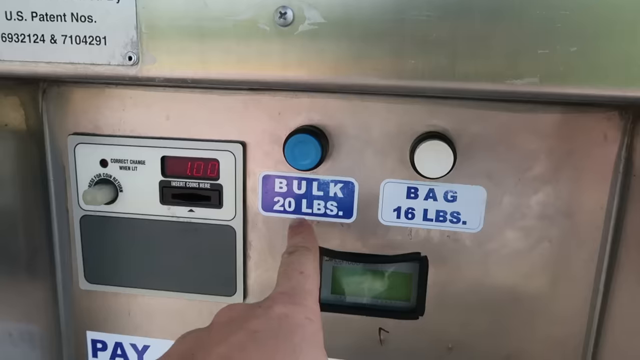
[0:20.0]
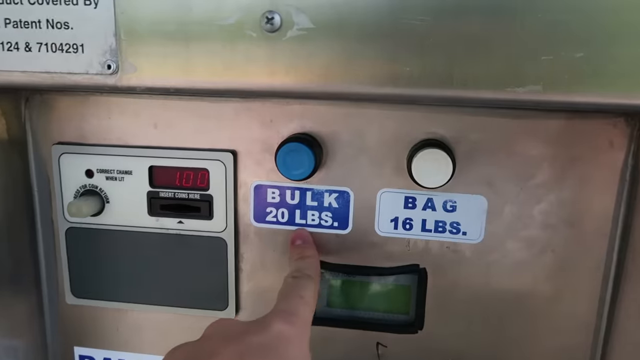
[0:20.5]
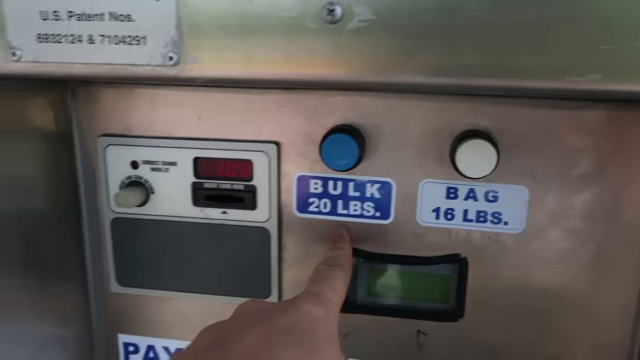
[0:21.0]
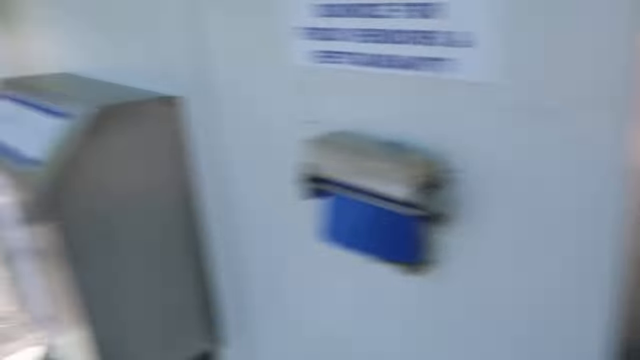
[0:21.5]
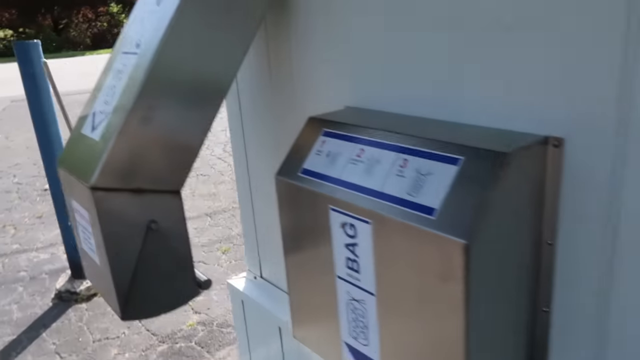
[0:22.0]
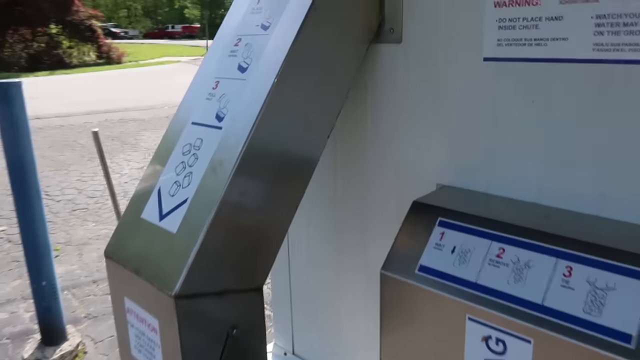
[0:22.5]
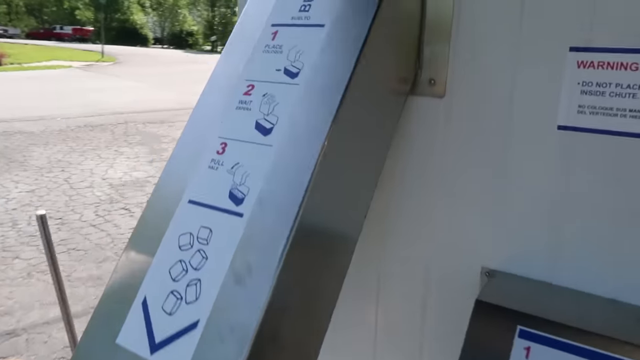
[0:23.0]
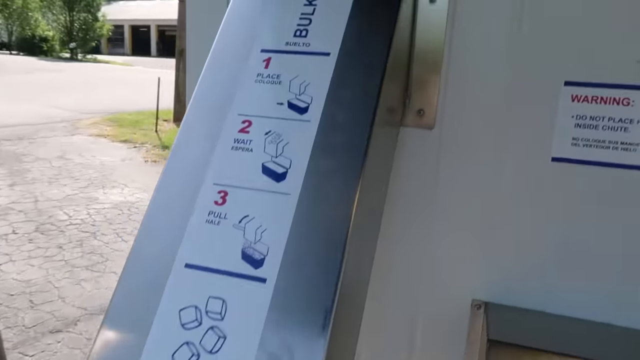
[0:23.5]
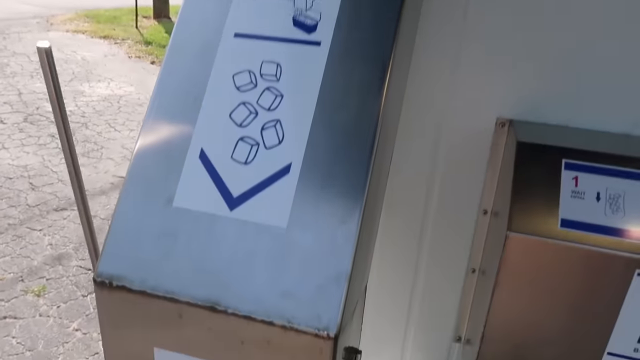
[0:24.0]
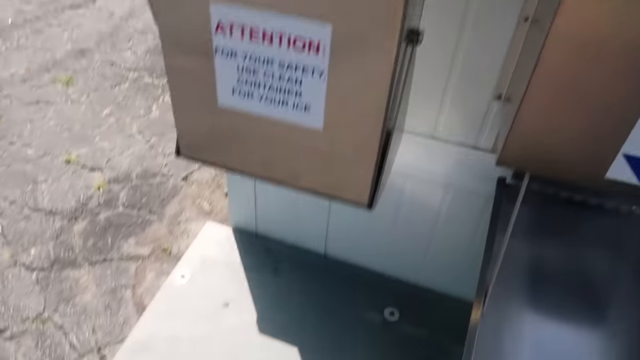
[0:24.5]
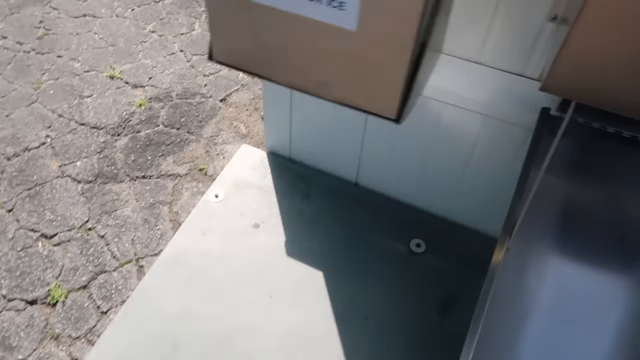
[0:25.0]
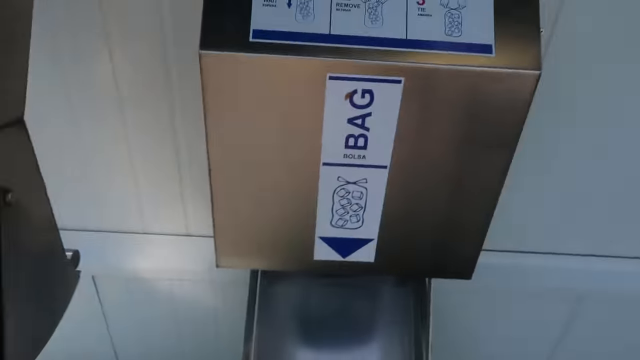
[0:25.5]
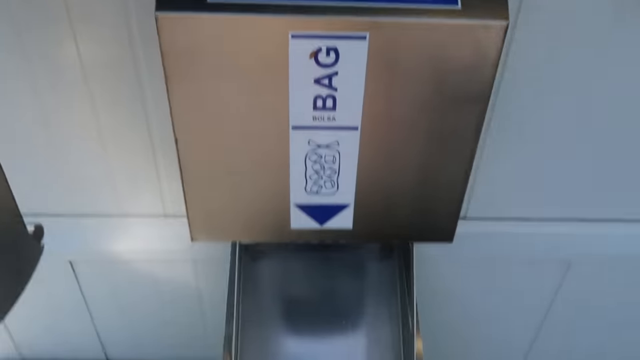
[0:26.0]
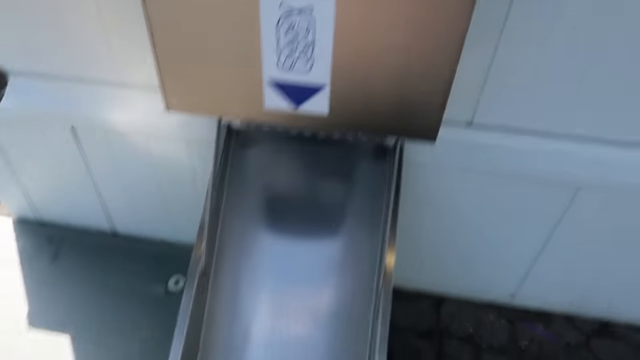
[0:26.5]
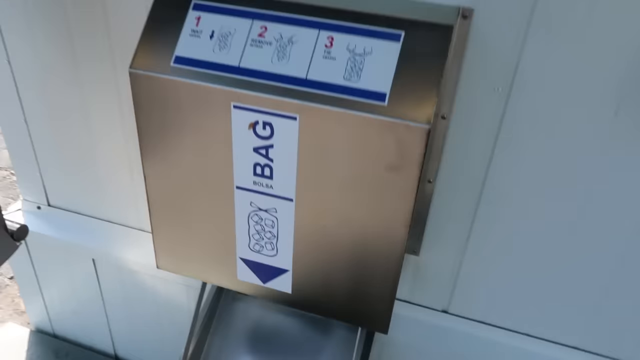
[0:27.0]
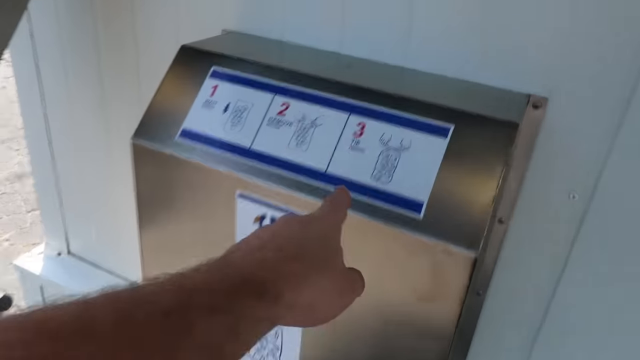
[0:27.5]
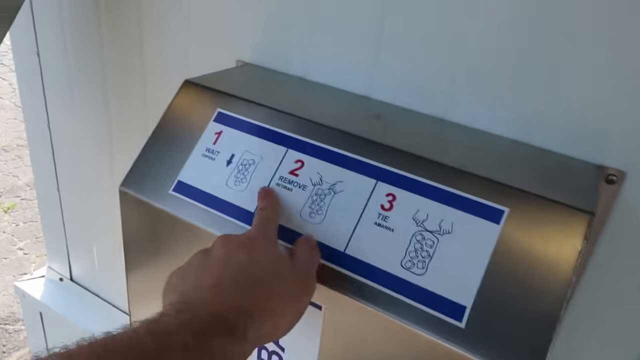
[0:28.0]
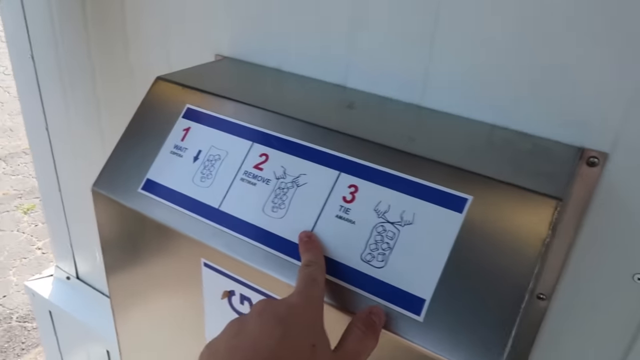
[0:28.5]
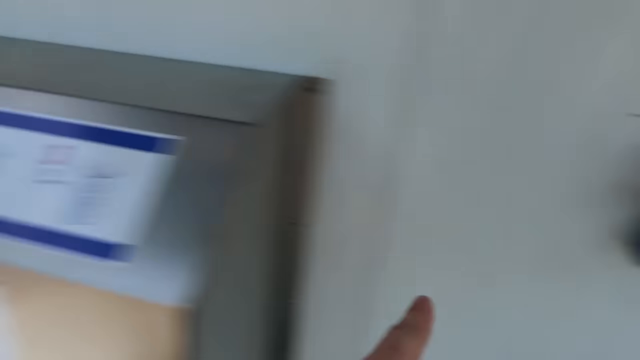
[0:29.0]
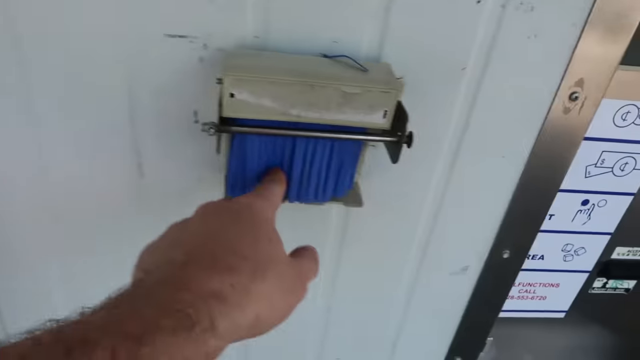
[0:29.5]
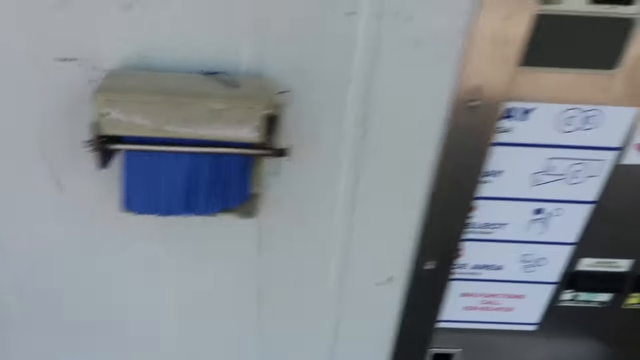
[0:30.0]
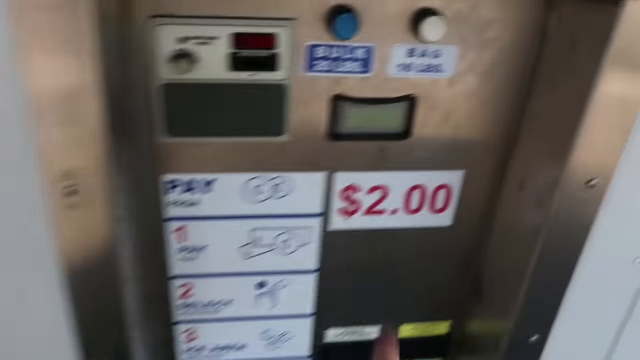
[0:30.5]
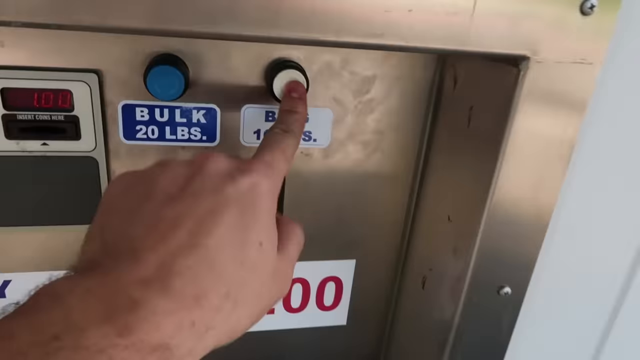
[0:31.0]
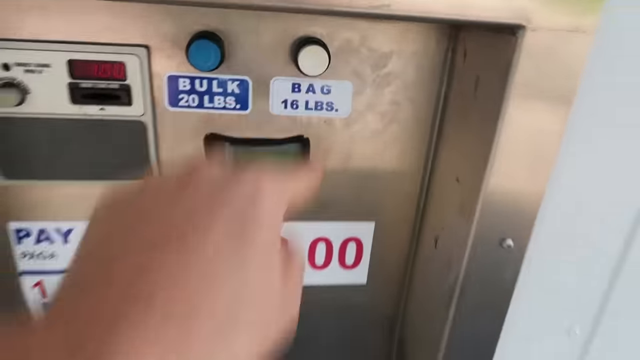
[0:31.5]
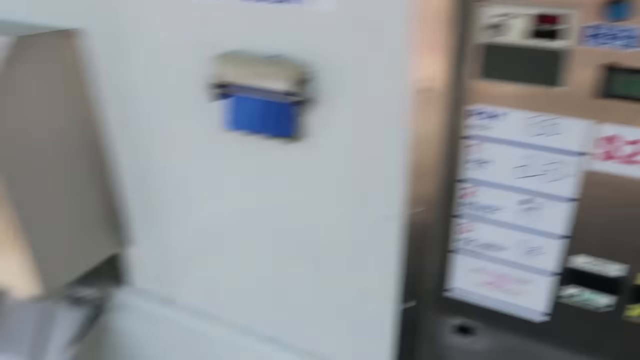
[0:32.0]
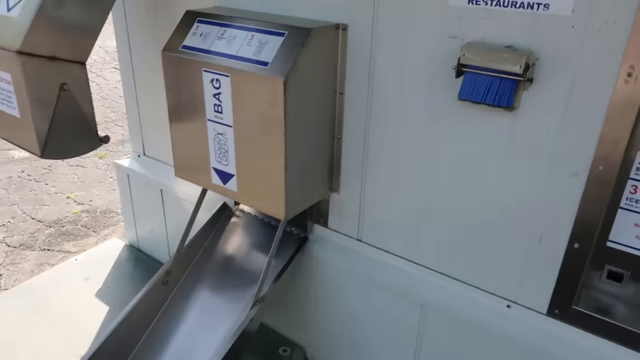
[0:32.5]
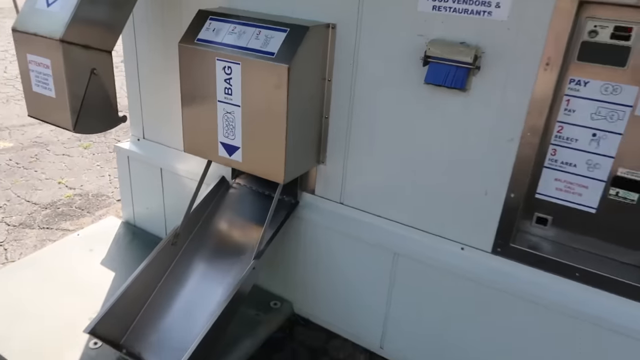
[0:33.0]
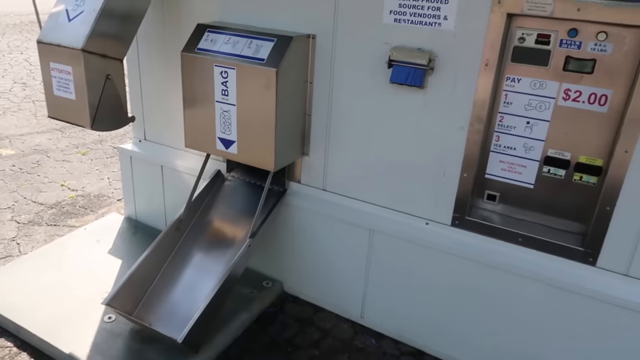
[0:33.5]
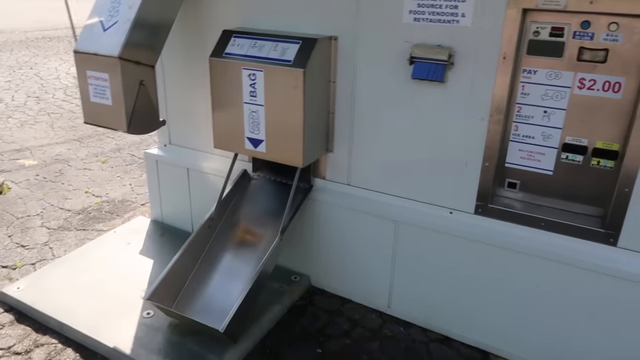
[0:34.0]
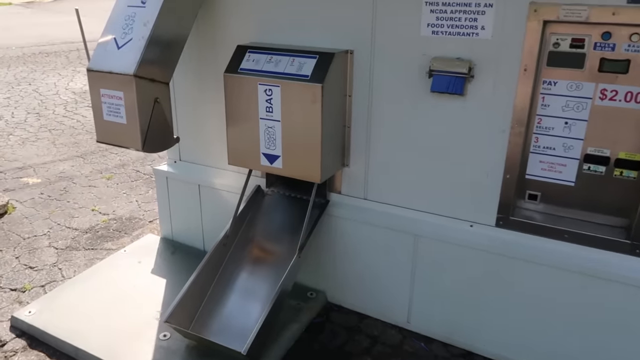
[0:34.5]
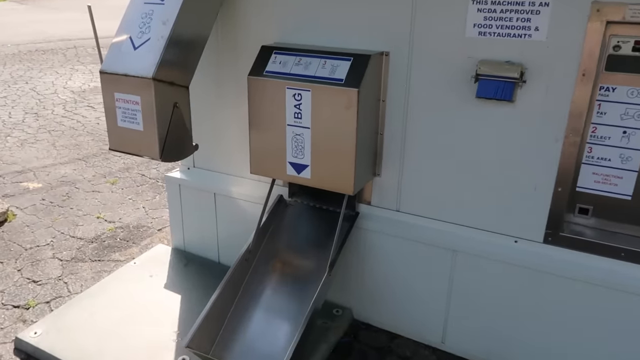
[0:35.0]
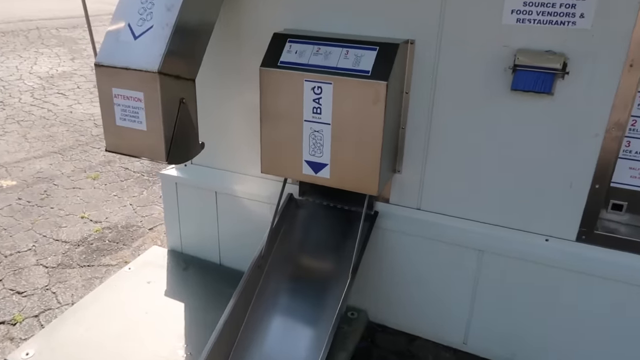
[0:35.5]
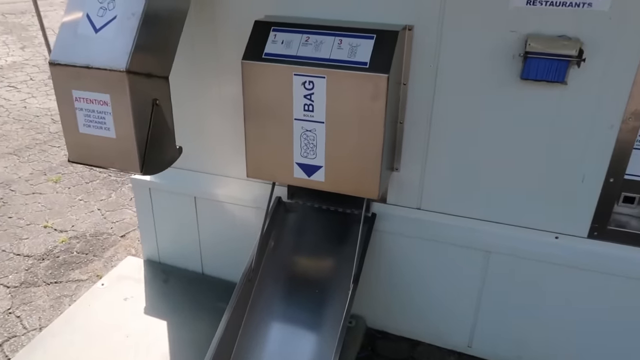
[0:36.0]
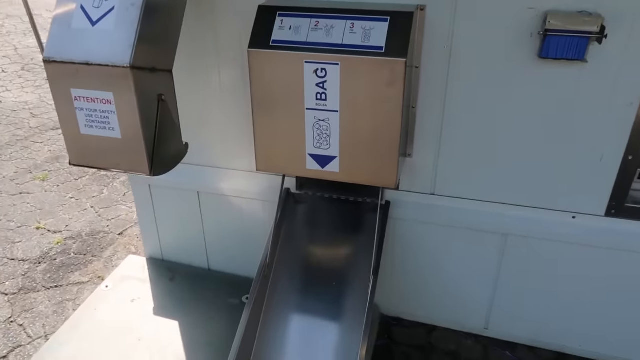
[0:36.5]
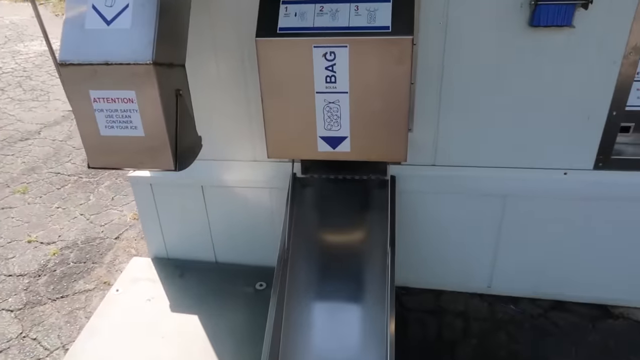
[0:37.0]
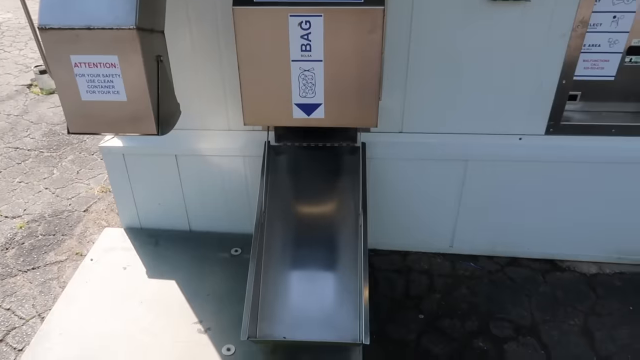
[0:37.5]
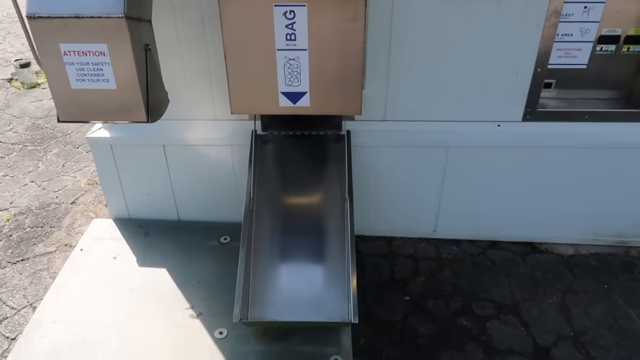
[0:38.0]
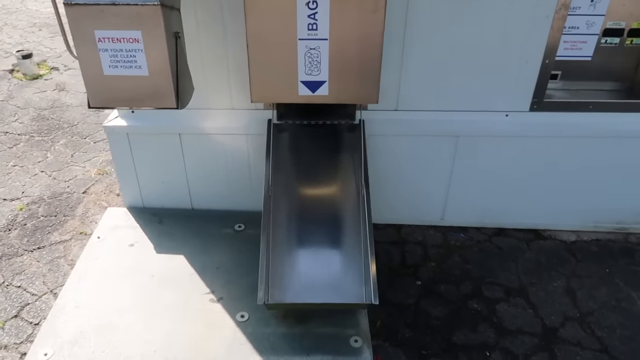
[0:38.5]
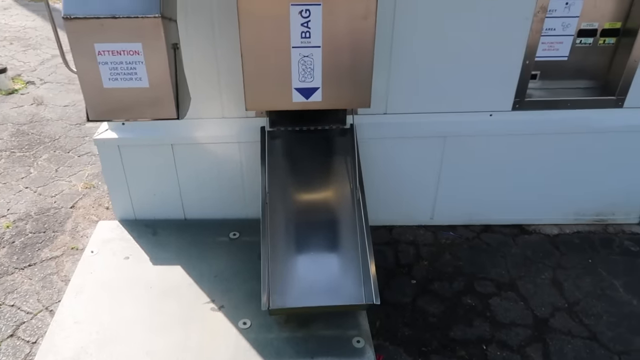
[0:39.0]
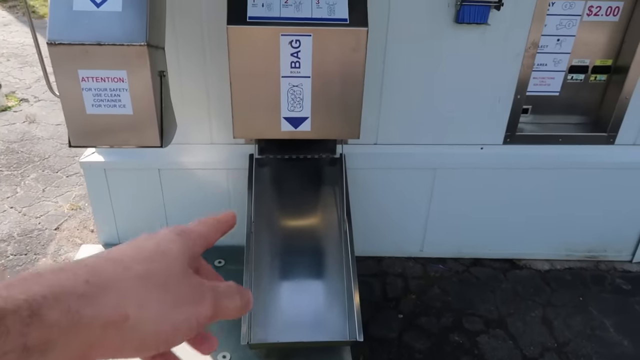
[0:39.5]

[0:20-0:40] On the ice vending machine, a man's finger points at a blue button labeled "bulk 20 pounds". The camera moves over toward a metal tube that the ice comes out from, which has some signs on it giving instructions. The camera then points down to where the ice is dispensed, and the man shows a compartment where the 16-pound bag of ice comes out. He points at instructions on the dispenser showing how to get the ice, then goes over to the front of the vending machine again, where the amount of ice is chosen, and presses the white button for 16 pounds. The camera is then backed up to show where the ice comes out.